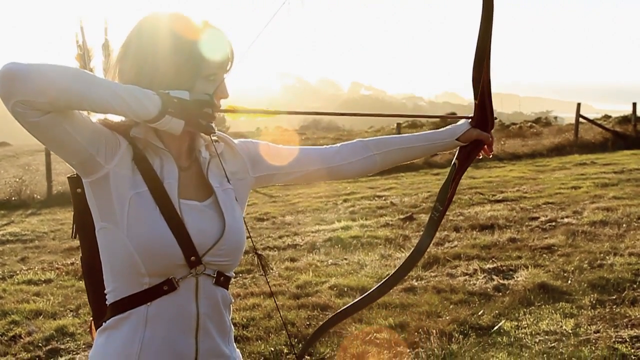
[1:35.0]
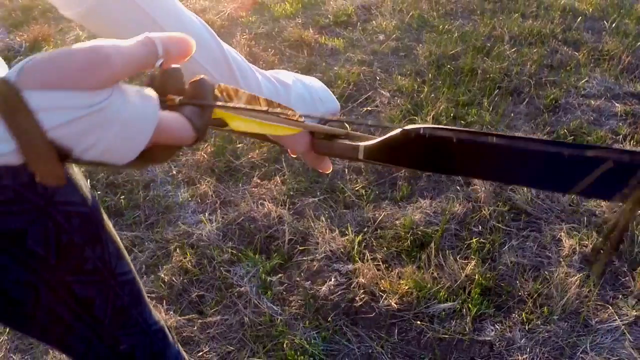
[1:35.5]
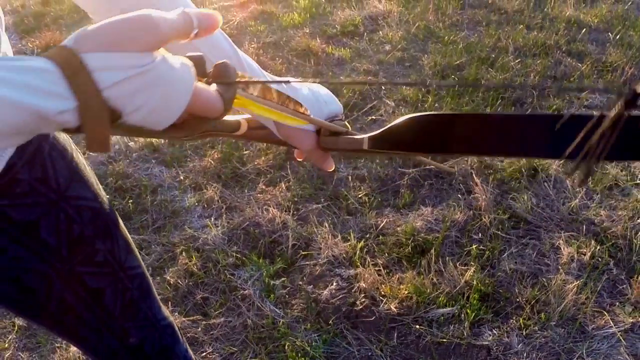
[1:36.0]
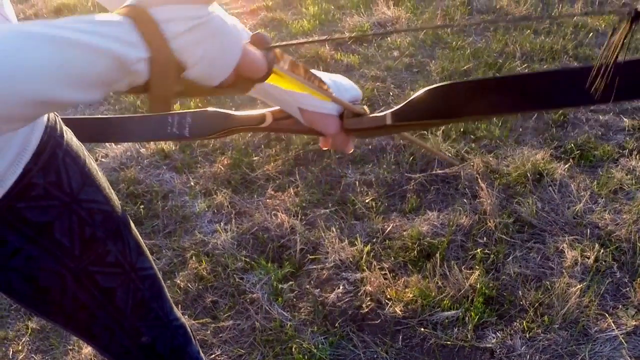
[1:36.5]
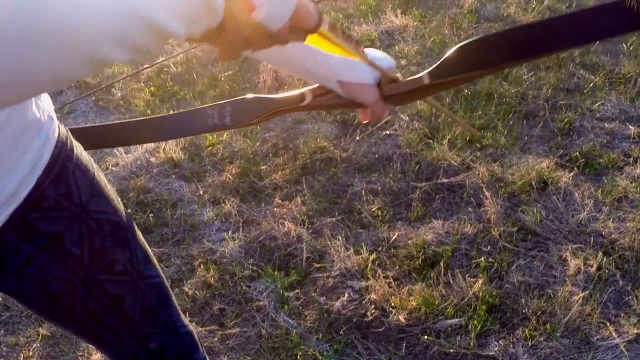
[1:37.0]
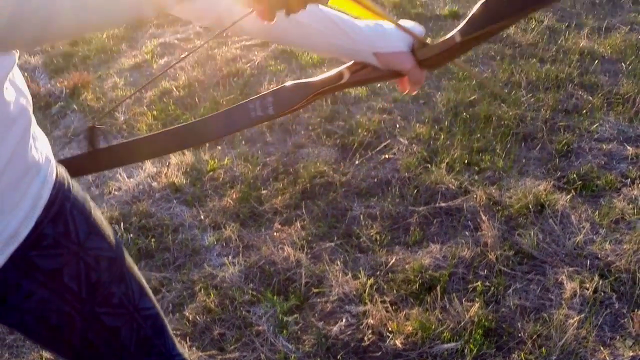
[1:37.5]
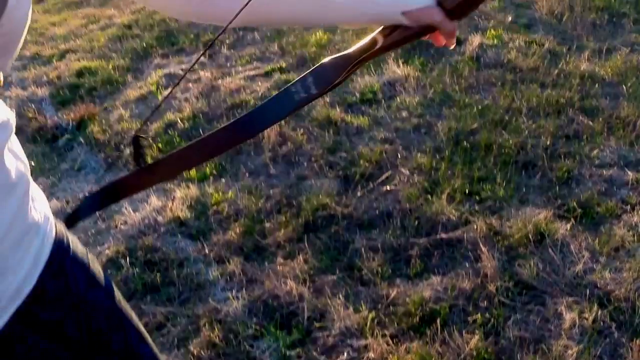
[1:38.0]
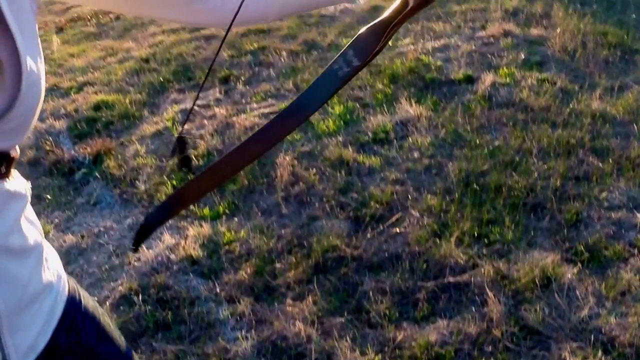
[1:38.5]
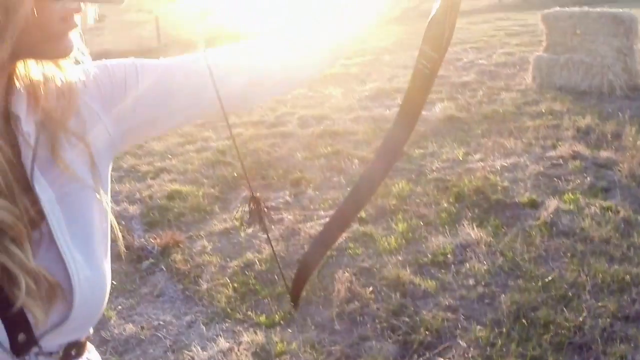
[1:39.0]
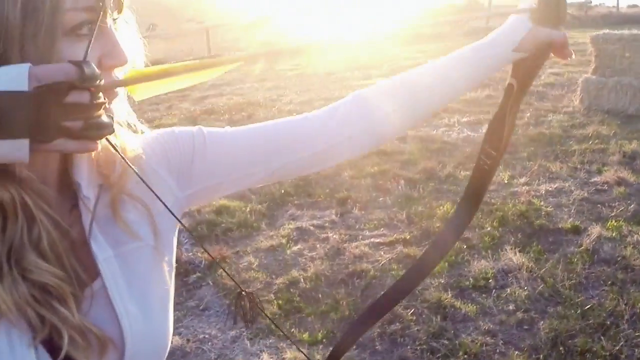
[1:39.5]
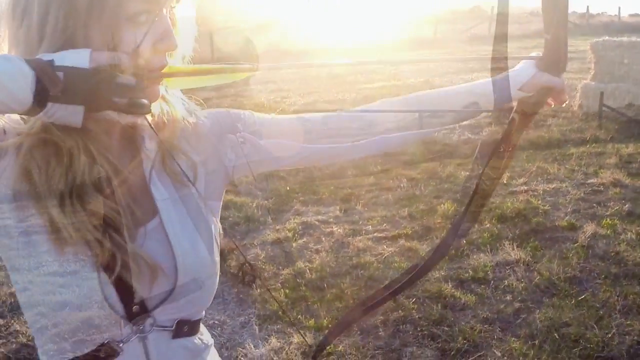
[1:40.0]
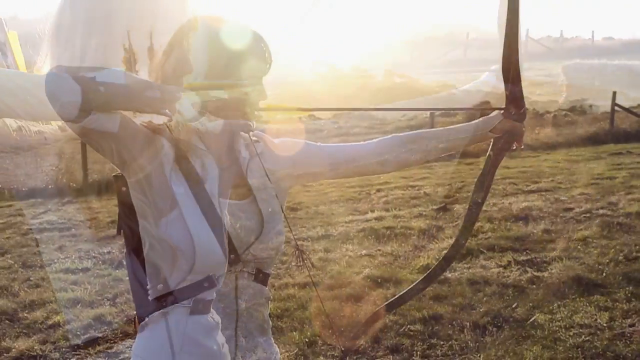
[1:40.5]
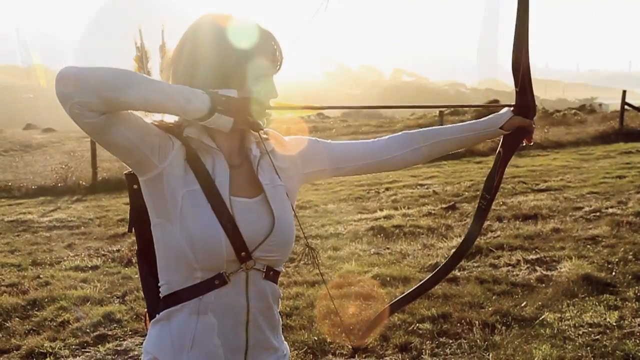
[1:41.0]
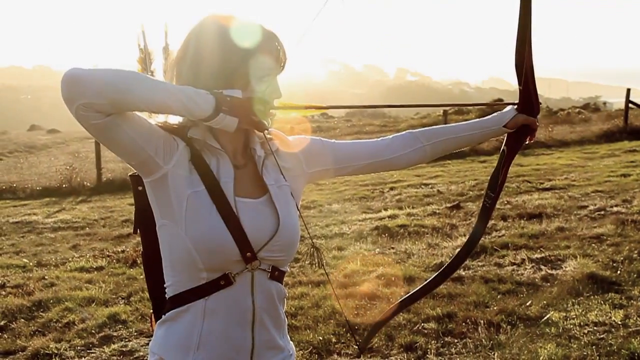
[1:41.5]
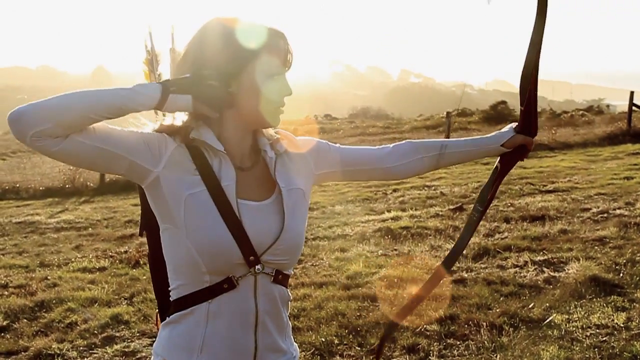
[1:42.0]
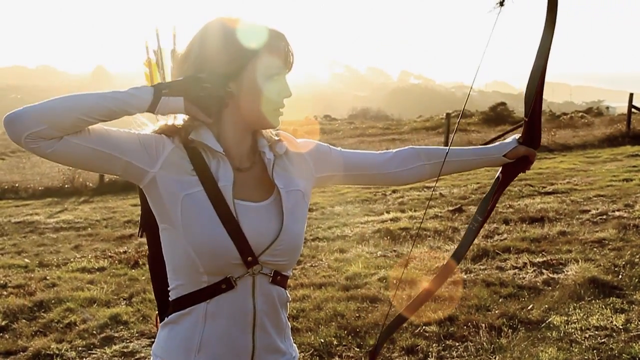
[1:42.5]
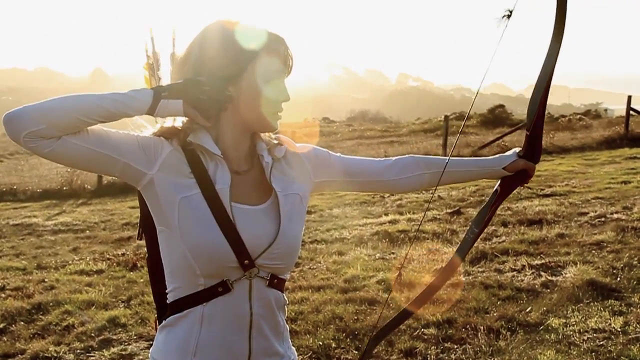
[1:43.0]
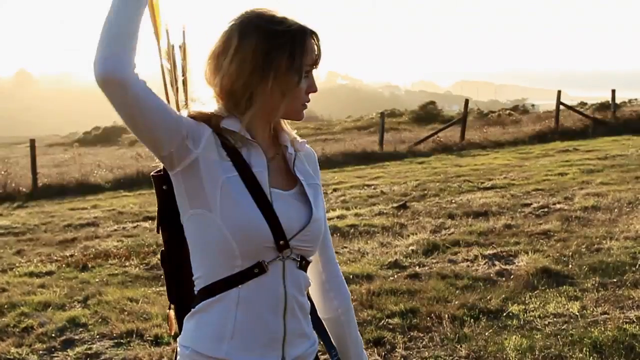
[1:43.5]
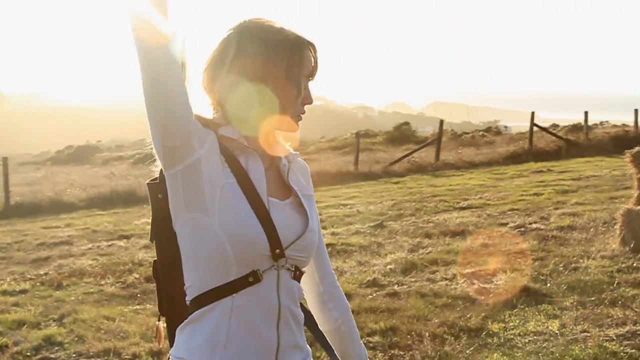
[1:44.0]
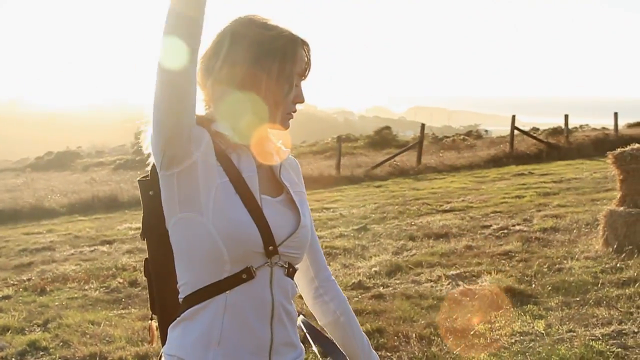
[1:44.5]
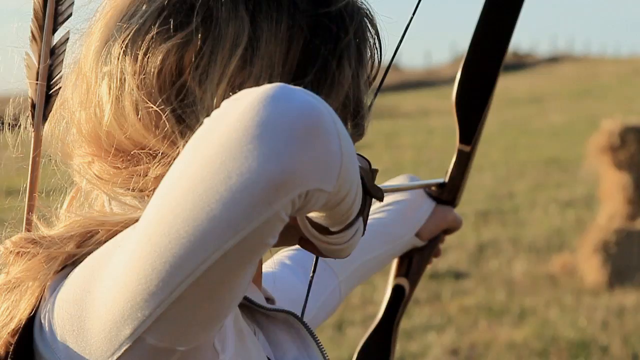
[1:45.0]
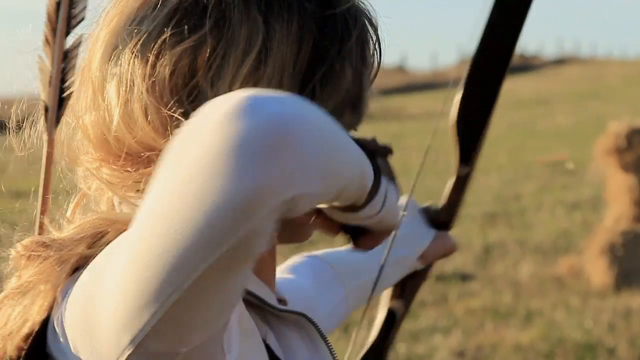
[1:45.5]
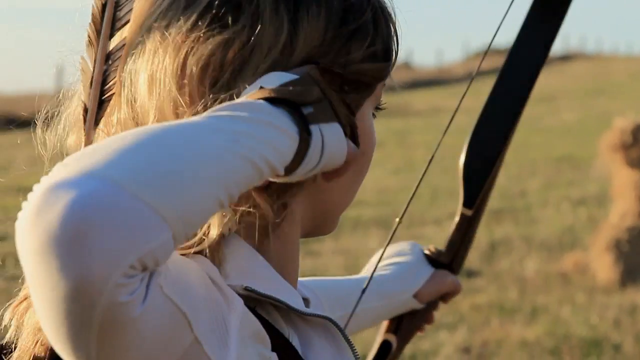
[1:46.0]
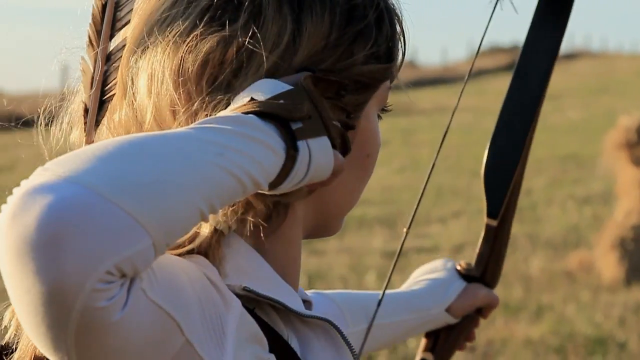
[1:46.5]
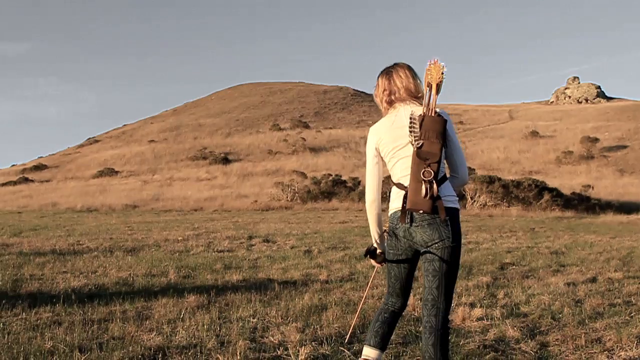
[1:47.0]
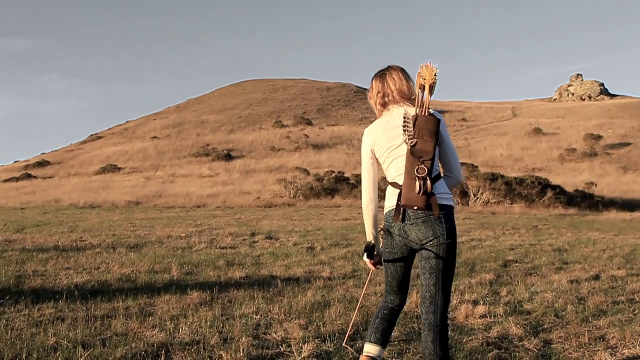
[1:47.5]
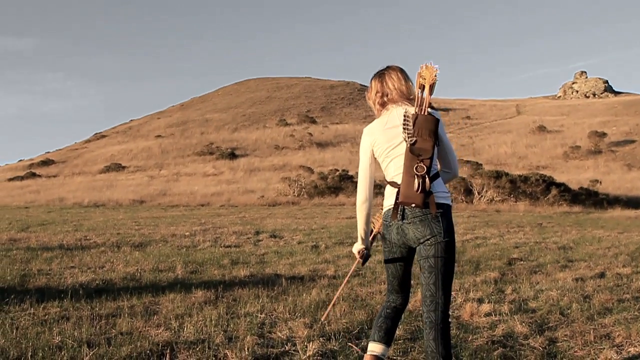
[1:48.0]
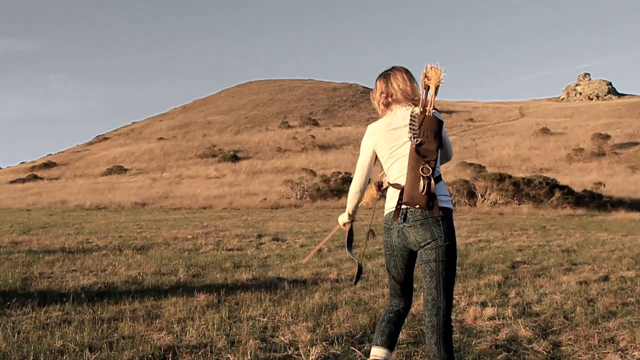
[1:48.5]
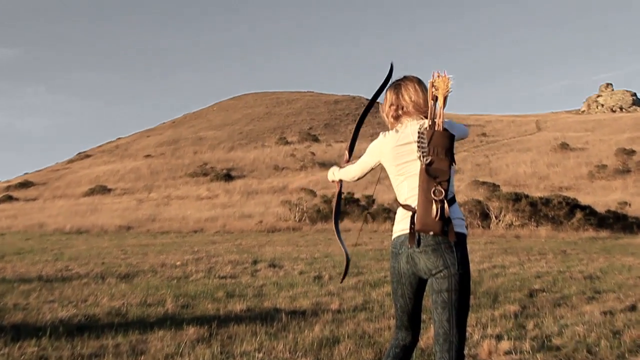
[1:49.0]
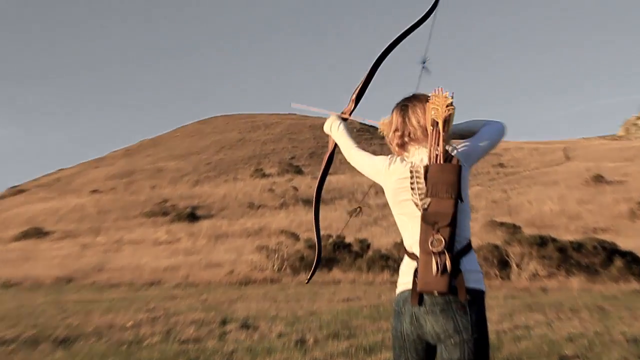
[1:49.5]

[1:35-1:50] The girl quickly raises the bow and arrow near her head, then the image flashes and the scene changes. A very close view shows her holding the bow. She slowly raises the bow and arrow and, at close range, shoots the arrow and holds her position for a couple of seconds. From a different angle, she grabs another arrow from her bag. A very close view shows her elbow and the back of her head as she prepares to pull back and shoot at another bale of hay; she holds the posture for about one or two seconds. The scene changes to the girl standing, seen from behind, with mountainous hills in the distance. She starts to get ready to shoot again, lifting her arms into the air to fire the bow and arrow.